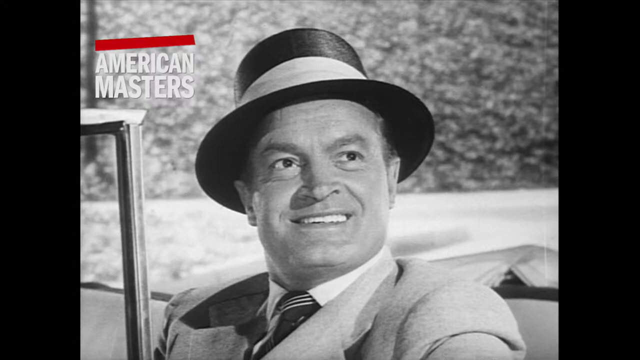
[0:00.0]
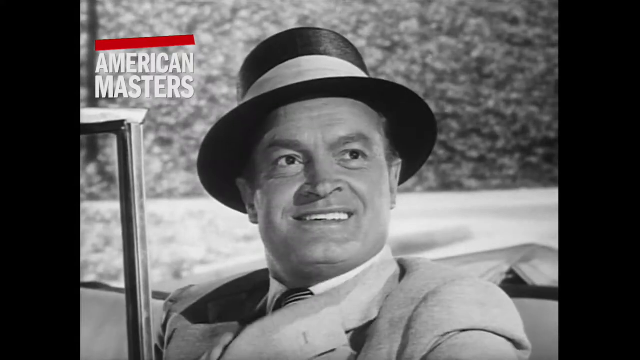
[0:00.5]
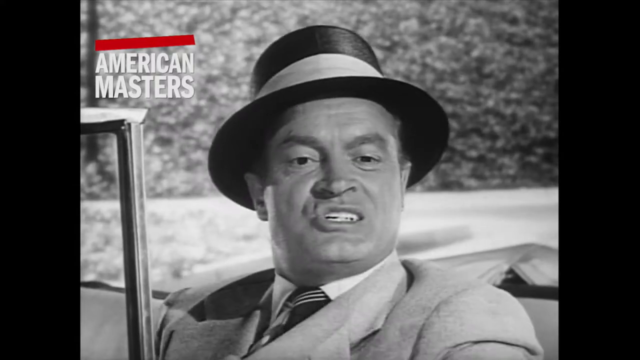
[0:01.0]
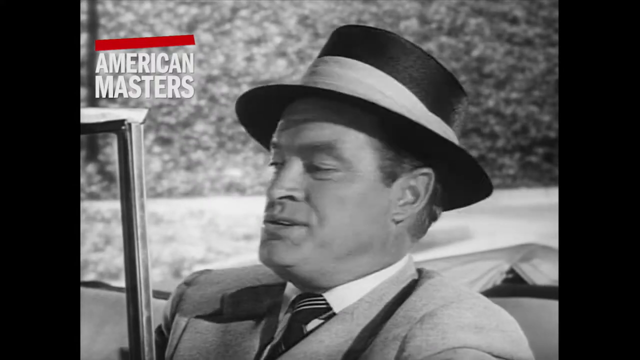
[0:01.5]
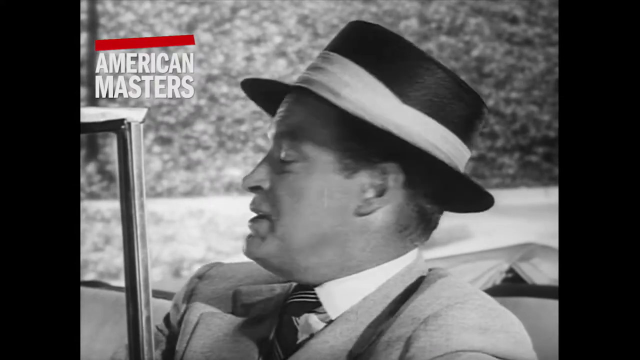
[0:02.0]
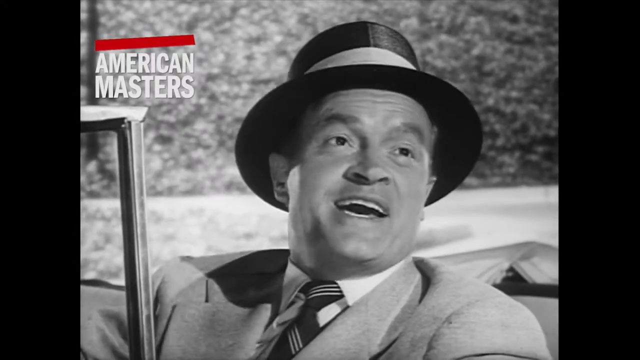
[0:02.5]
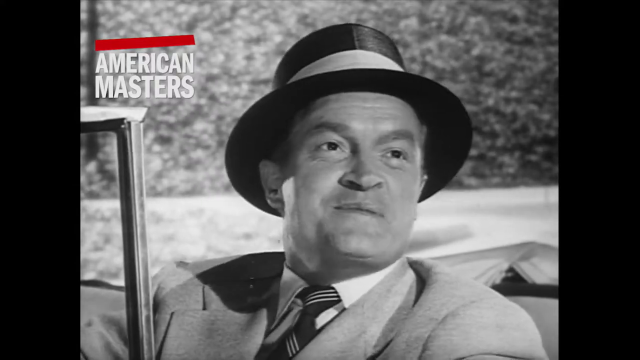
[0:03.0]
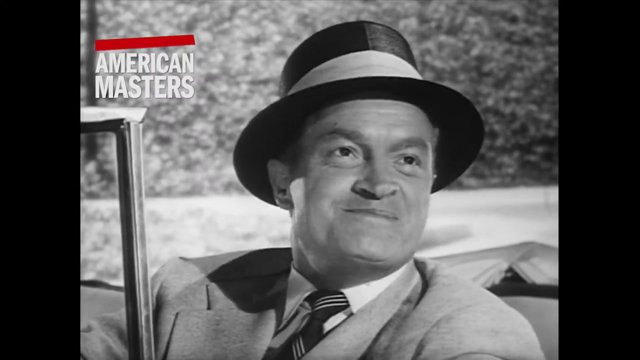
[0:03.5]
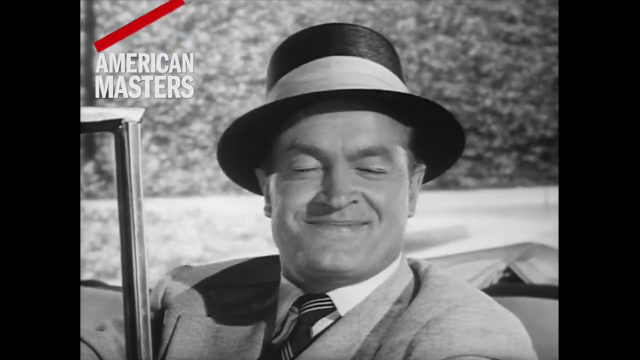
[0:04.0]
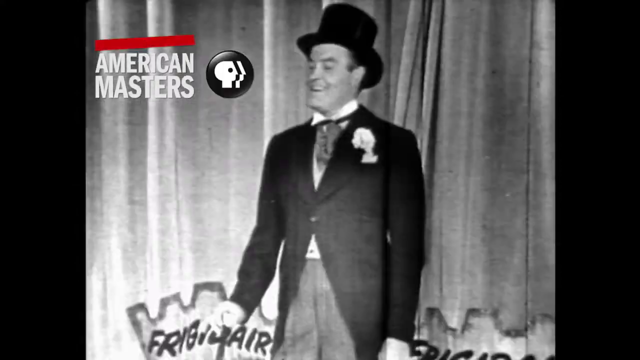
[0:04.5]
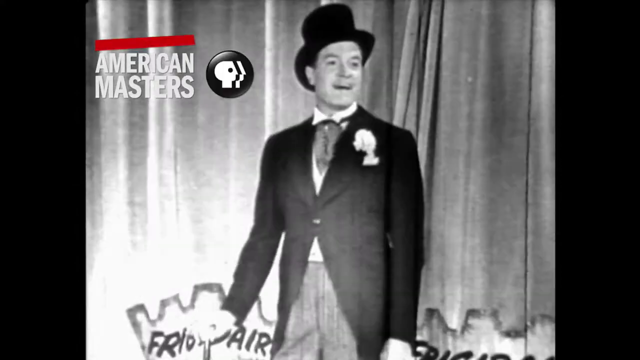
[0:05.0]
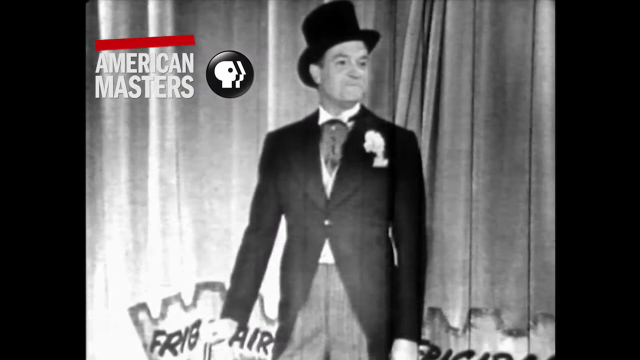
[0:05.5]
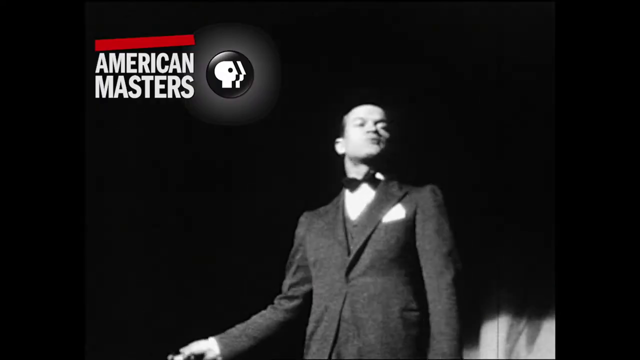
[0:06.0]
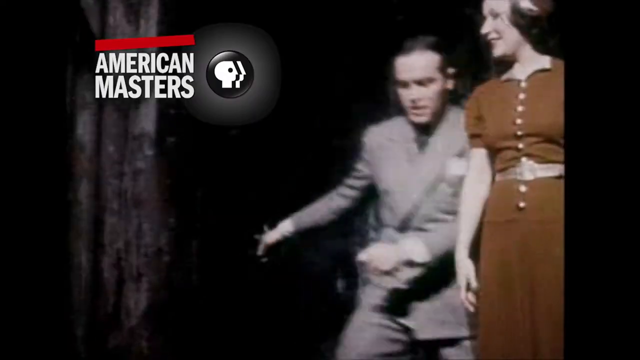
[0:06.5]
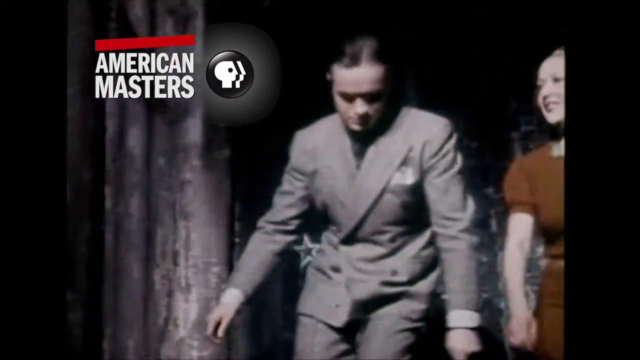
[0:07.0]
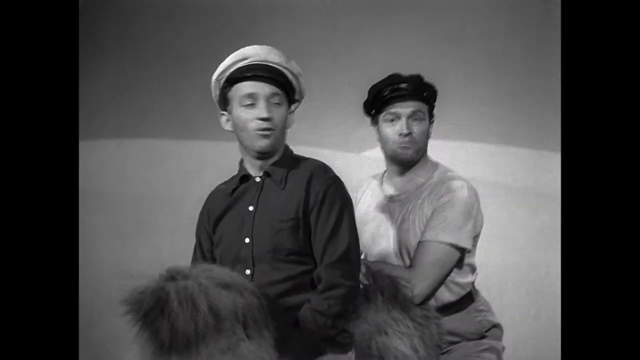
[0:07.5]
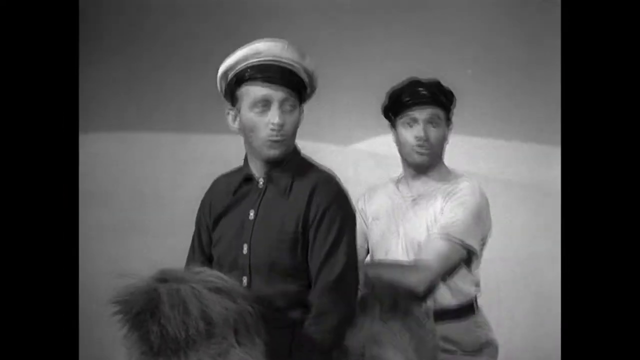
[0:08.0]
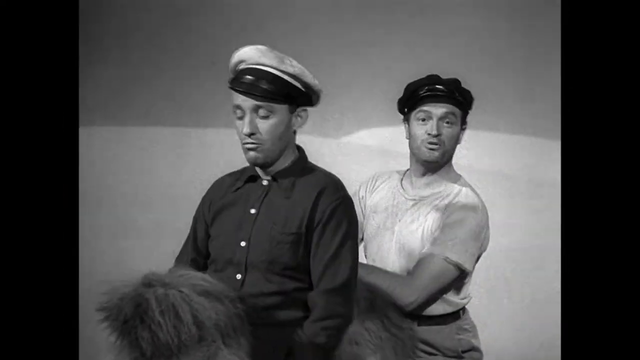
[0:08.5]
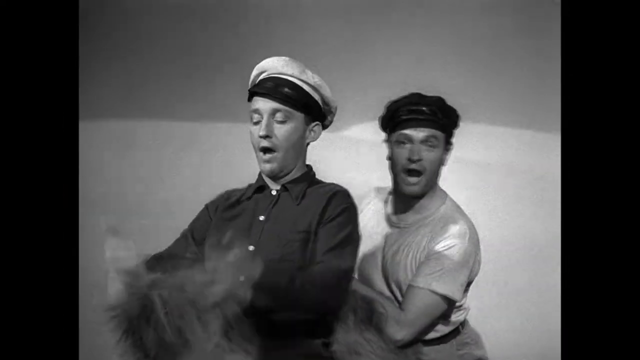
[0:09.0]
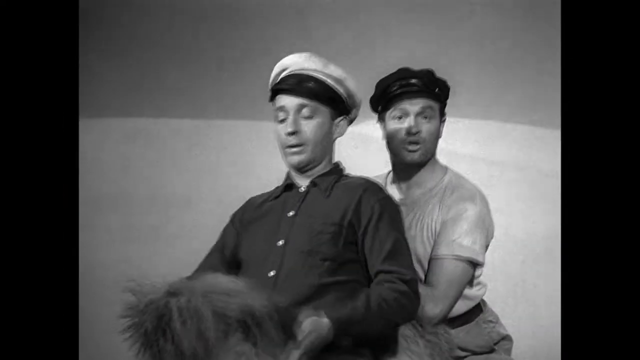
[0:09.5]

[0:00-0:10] In black and white, a Caucasian man in a black top hat has his eyes wide open and a smile that shows his front row of teeth. In the upper right corner, the words "American Masters" appear with a red line above them. The man turns his head toward the left and back toward the right, then starts talking; his mouth moves and wrinkles start showing up on his forehead. He talks fairly quickly and blinks. The scene switches to a man standing on a stage in a black top hat and black suit, with a curtain behind him. Next, another man stands on stage in a tuxedo with a light flashing down on his face. In another scene, a man walks up past a woman to the center of the screen. Then two men sit one behind the other, and both appear to be singing as they ride a camel.